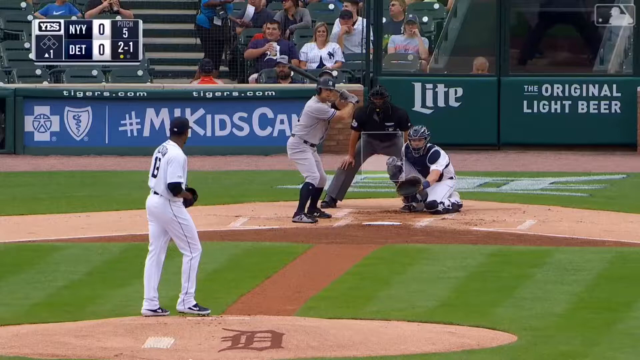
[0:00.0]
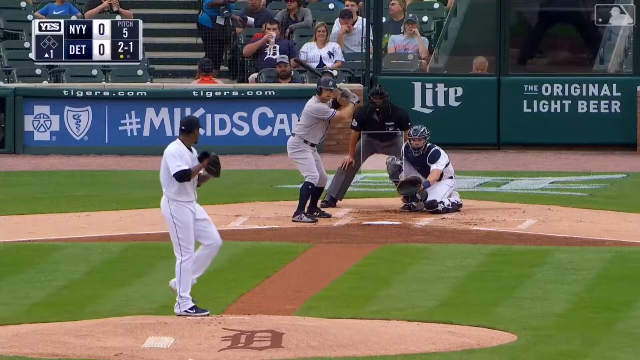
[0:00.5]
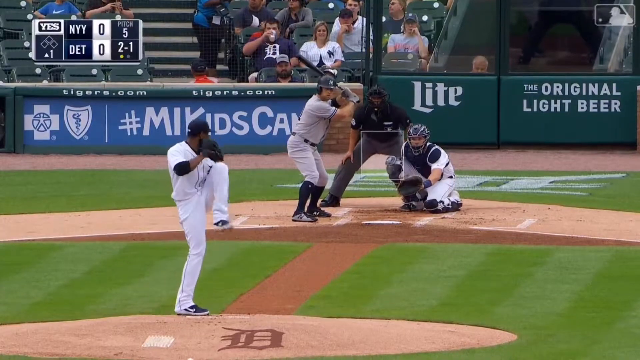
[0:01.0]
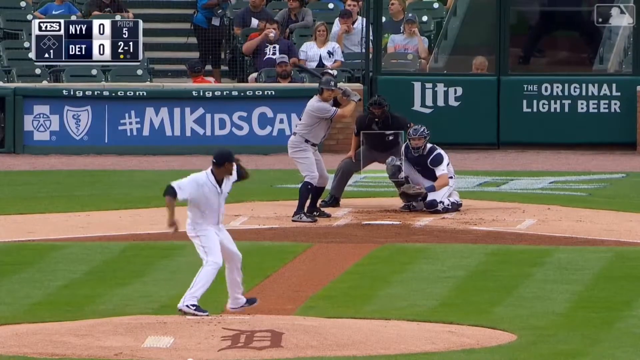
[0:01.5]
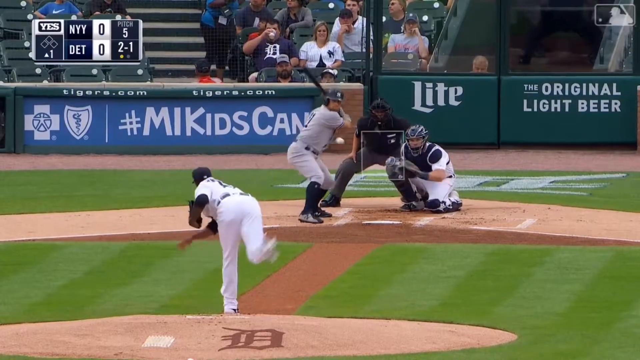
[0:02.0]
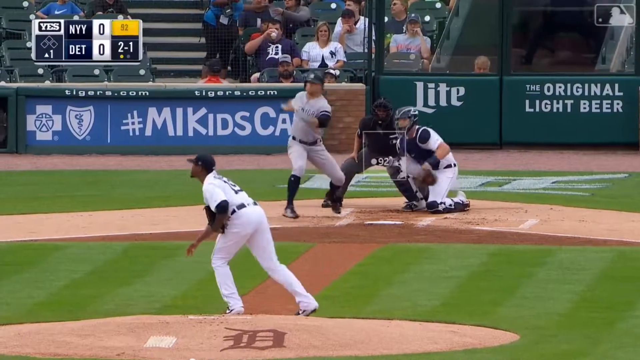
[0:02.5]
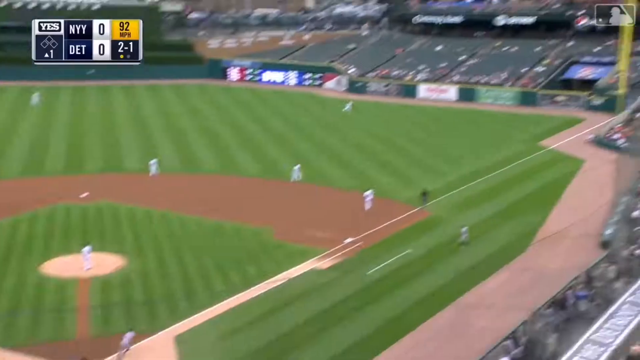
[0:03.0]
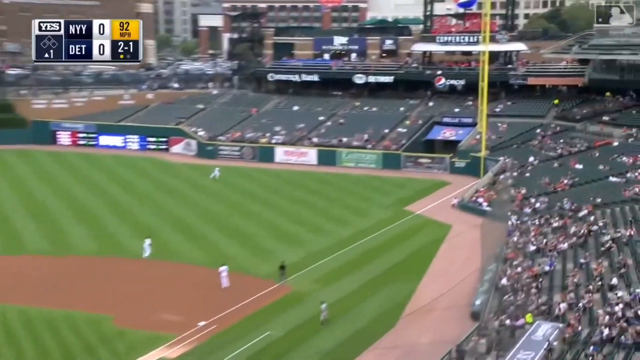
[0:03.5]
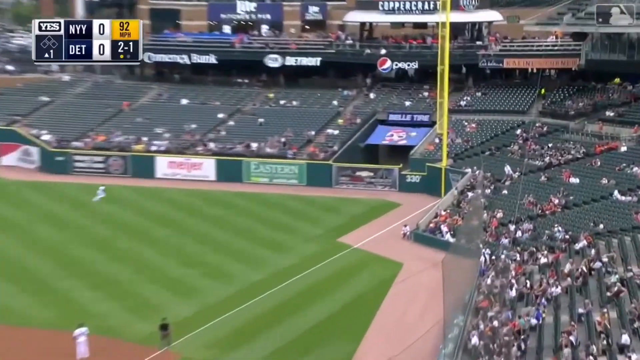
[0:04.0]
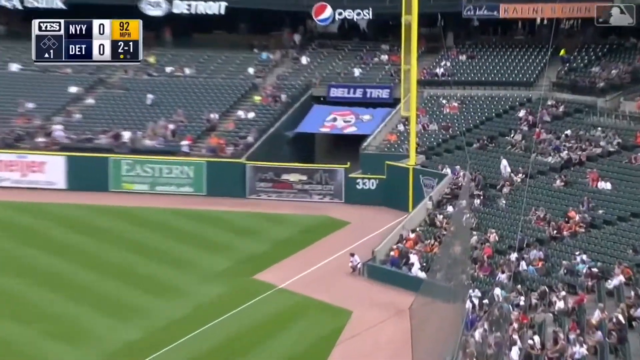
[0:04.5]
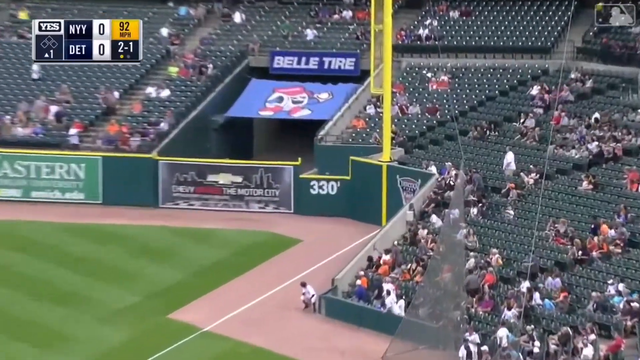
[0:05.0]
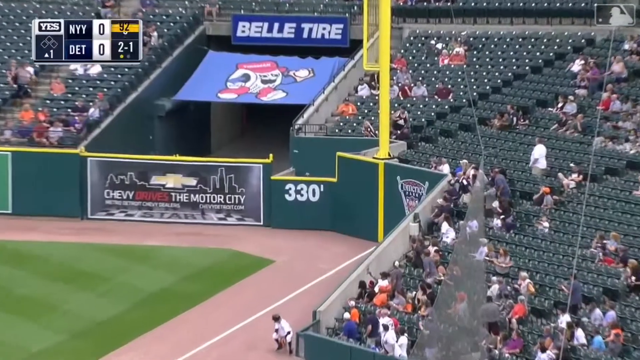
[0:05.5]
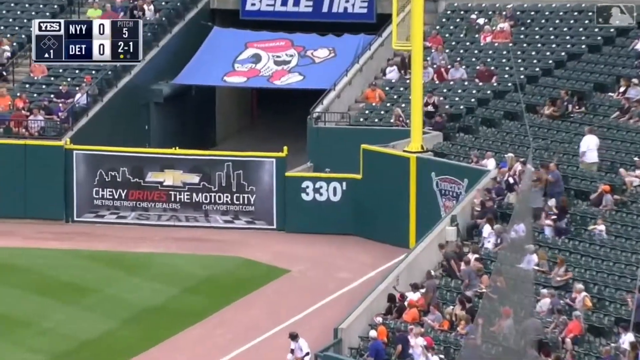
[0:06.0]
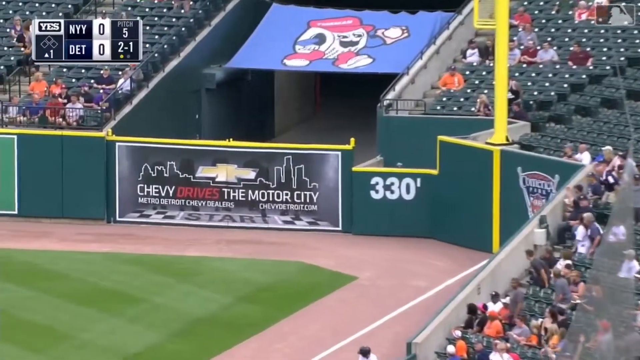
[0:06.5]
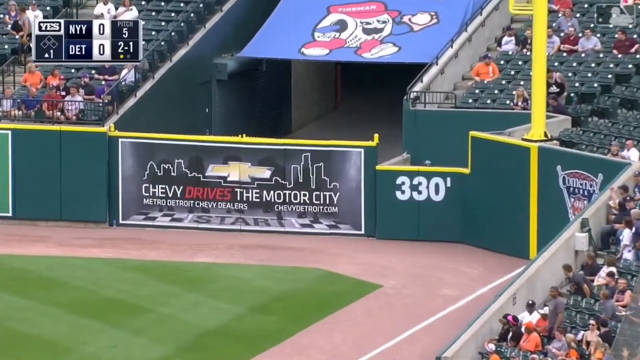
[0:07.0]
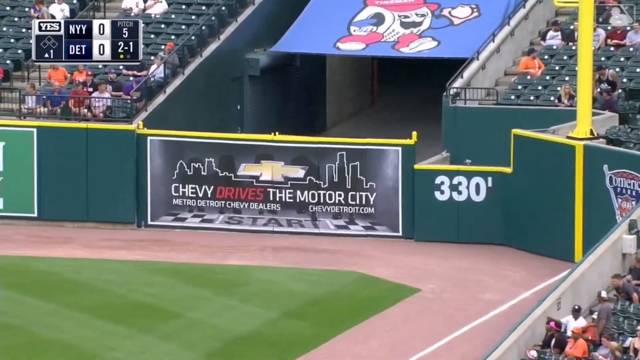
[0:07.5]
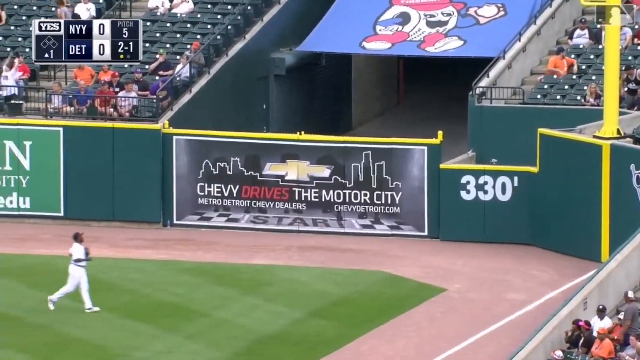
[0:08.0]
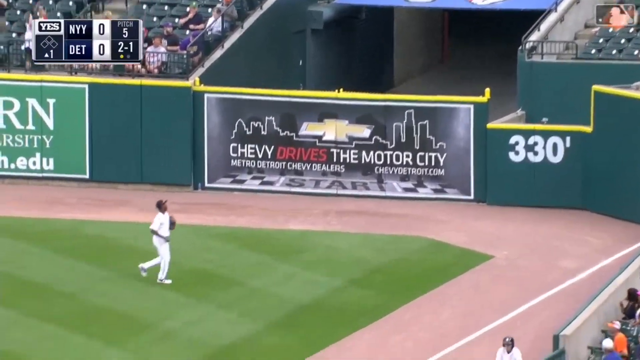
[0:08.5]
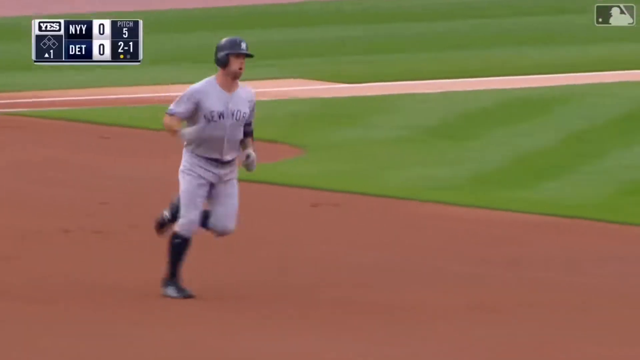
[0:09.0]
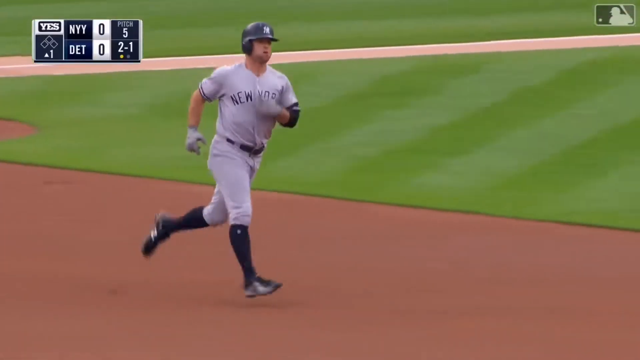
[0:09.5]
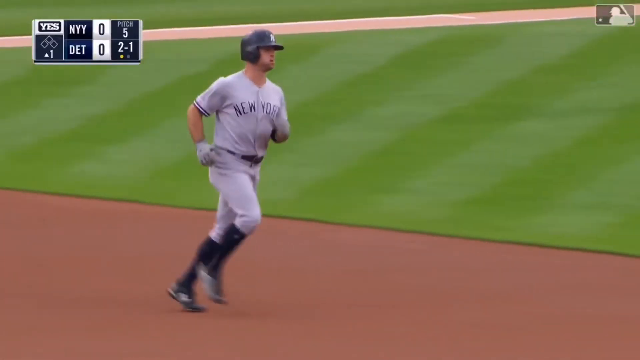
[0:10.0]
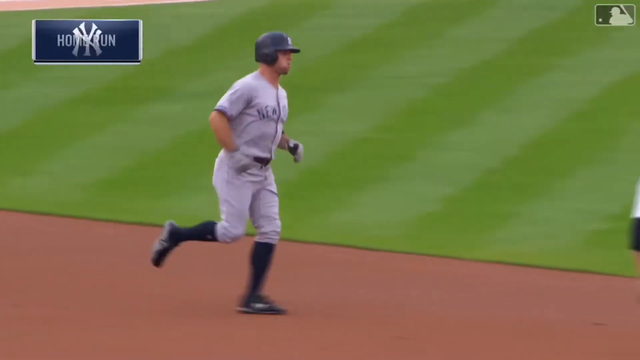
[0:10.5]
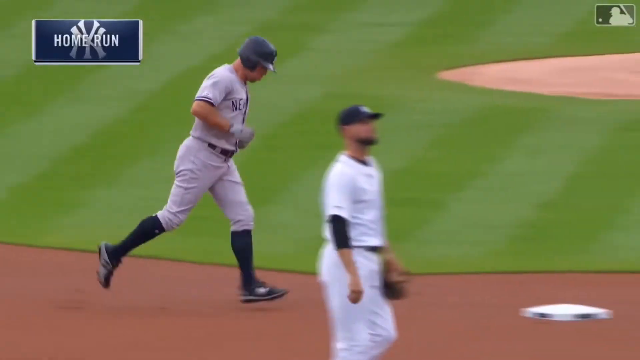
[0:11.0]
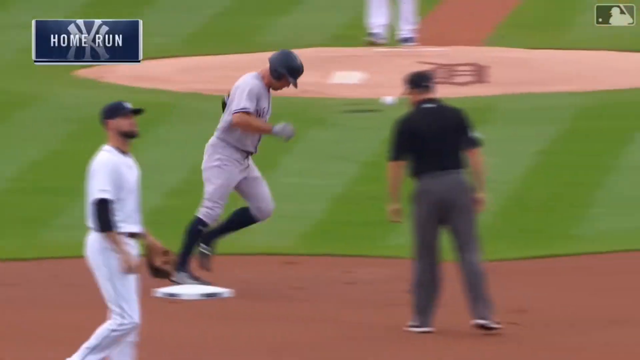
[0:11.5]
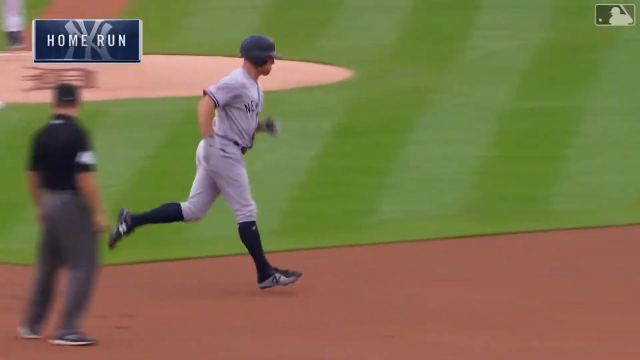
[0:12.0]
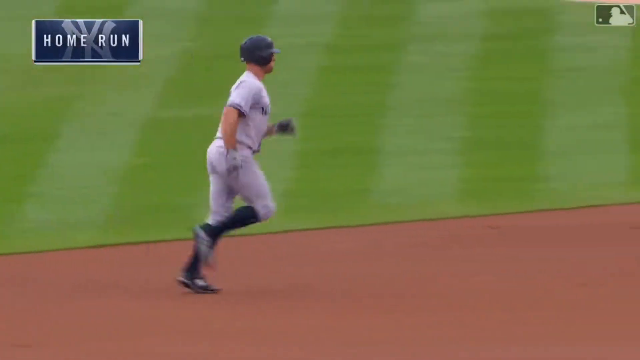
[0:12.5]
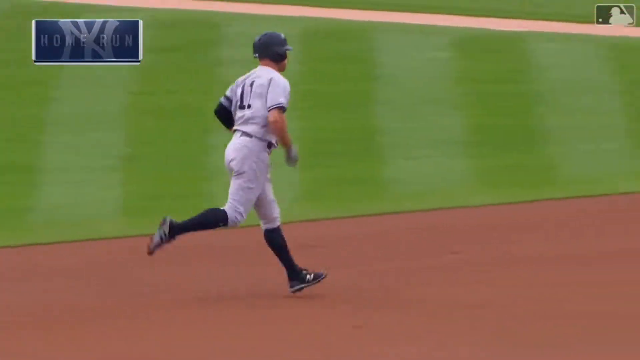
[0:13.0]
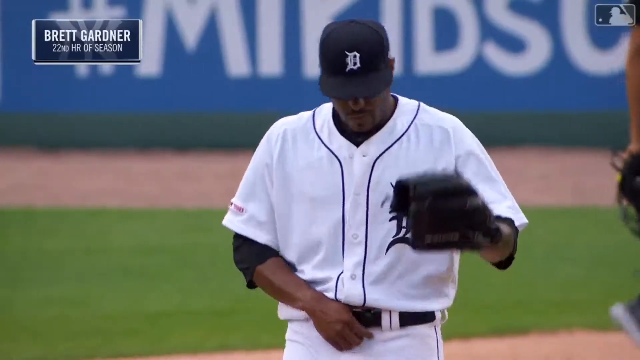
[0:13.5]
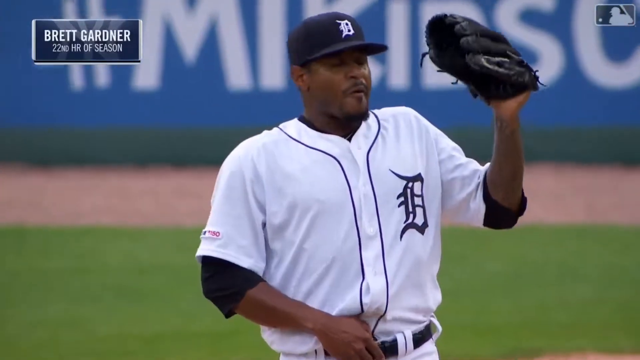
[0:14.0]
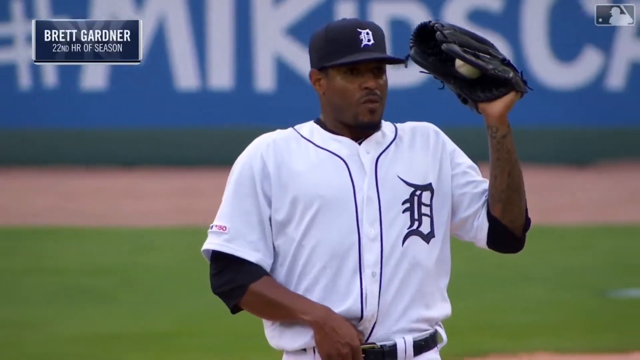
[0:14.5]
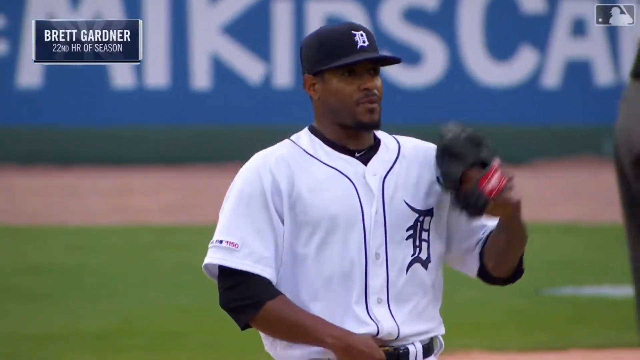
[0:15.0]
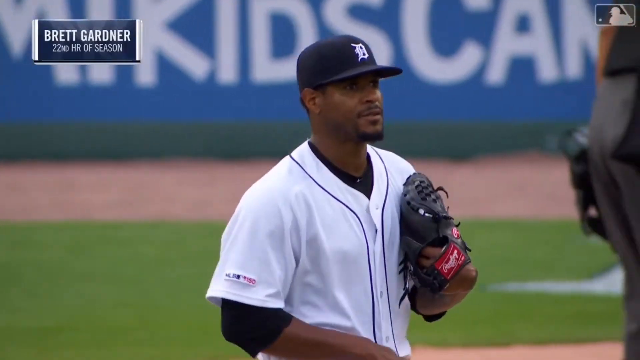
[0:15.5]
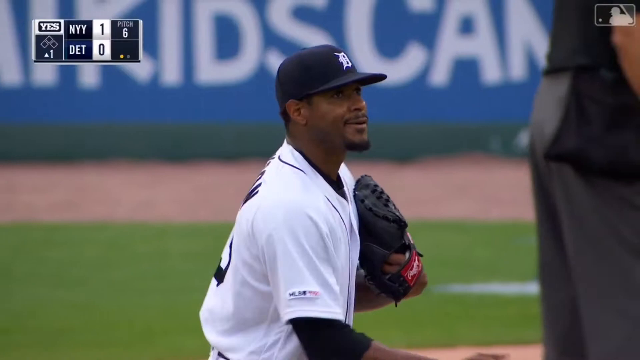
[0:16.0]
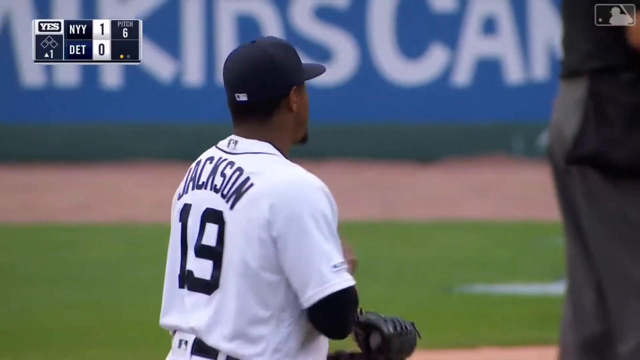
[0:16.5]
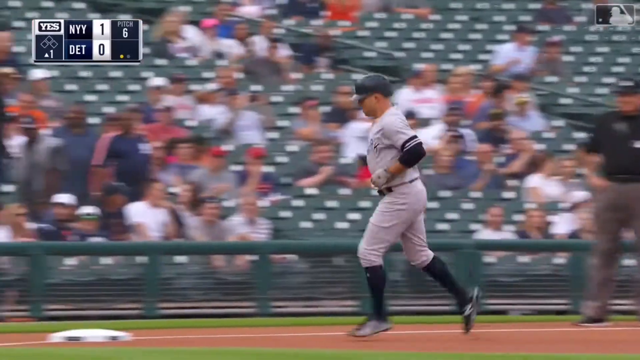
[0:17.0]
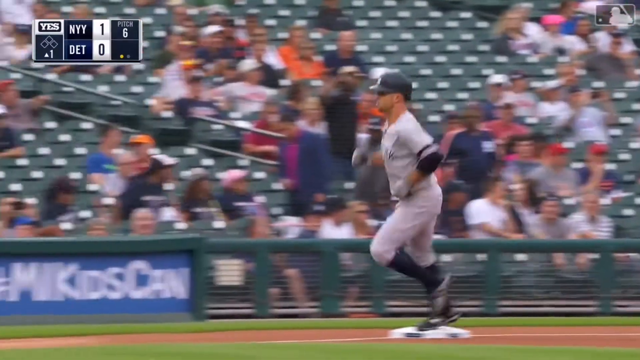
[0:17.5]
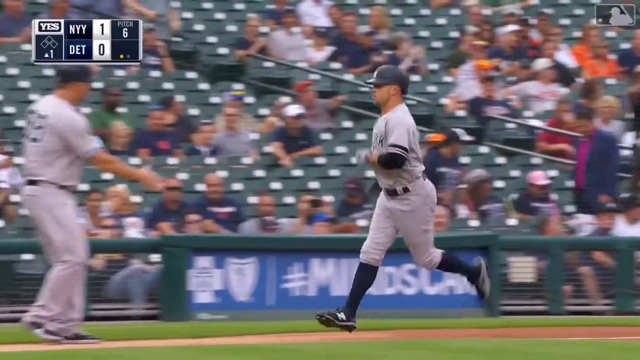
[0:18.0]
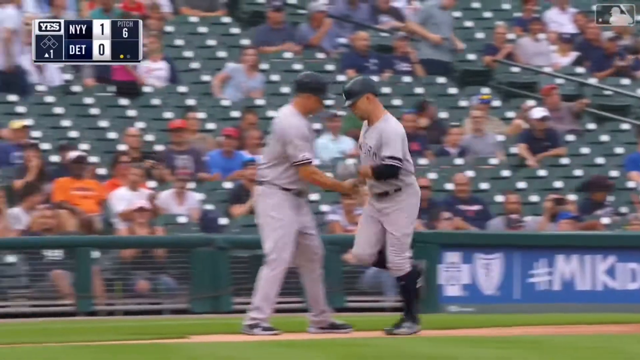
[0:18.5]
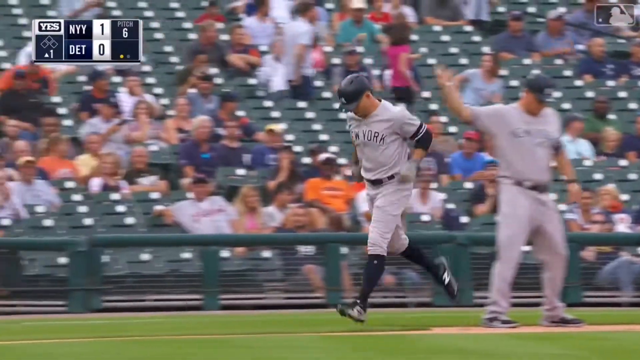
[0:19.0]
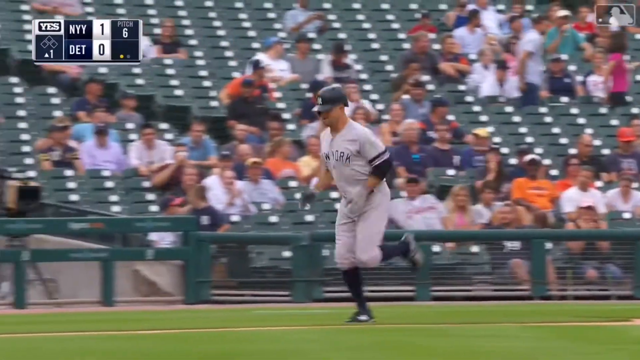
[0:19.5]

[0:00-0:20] A baseball game is underway. In the top left, a display shows the two teams with their scores, pitch numbers and innings; the score seems to be 0-0. In the background there are advertisements and sponsorships, such as My Kids, Bud Light and the original Light Beer, along with a crowd, while two teams play baseball against each other. A man of African-American descent wearing white on the left side seems to be pitching the ball to the batting team. The ball seems to land and apparently goes out of bounds, and the camera pans to follow where the ball is going, passing a yellow pole and a Chevy banner advertisement. The ball goes over the net, and a guy wearing a jersey that says "New York" runs and walks across the field. It seems to be a home run, and he jogs slowly toward the infield.